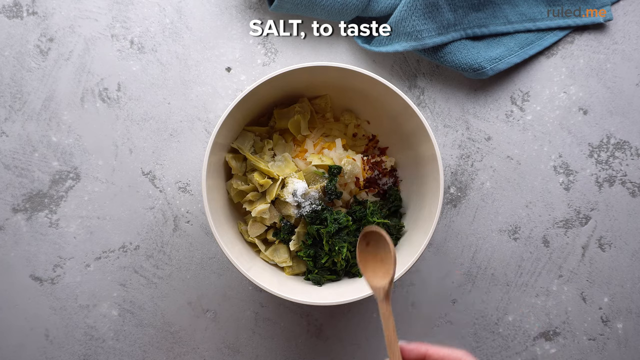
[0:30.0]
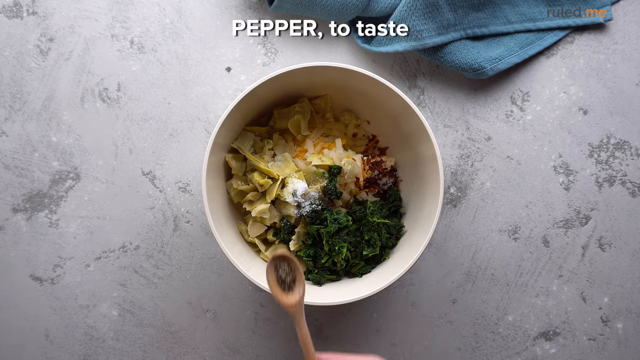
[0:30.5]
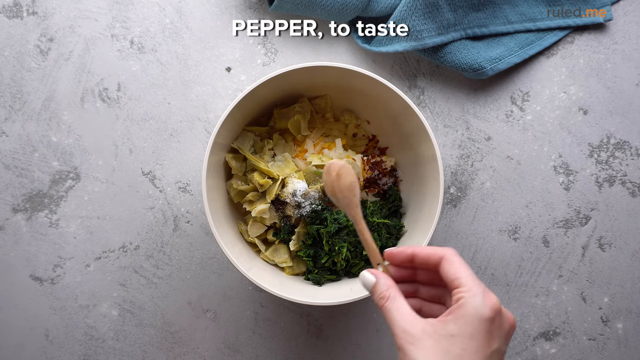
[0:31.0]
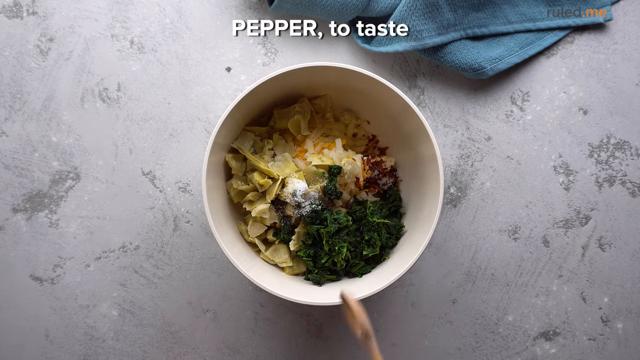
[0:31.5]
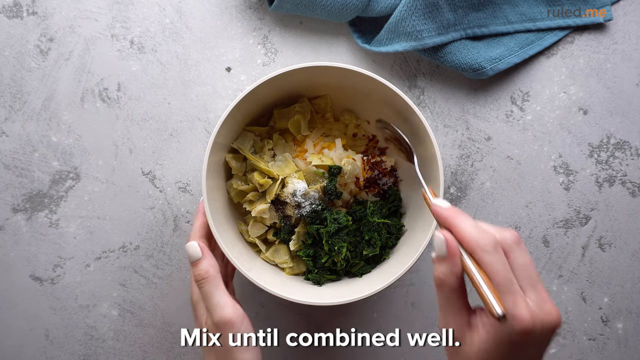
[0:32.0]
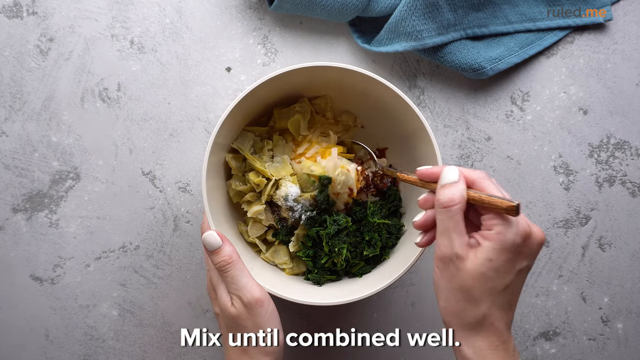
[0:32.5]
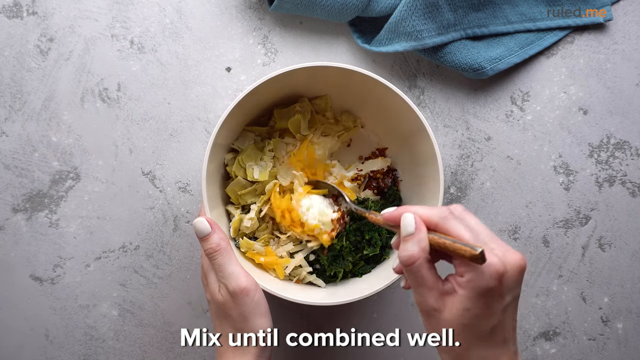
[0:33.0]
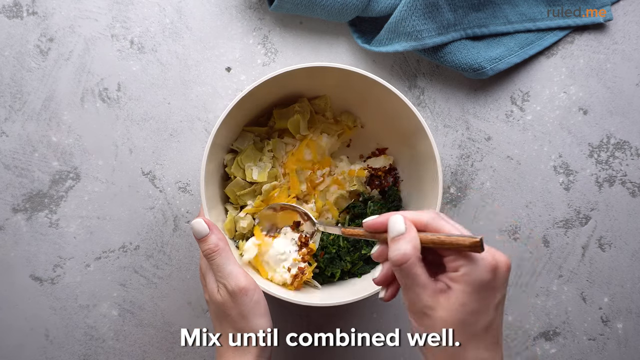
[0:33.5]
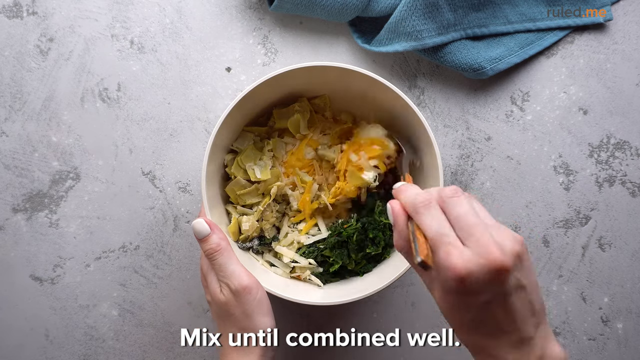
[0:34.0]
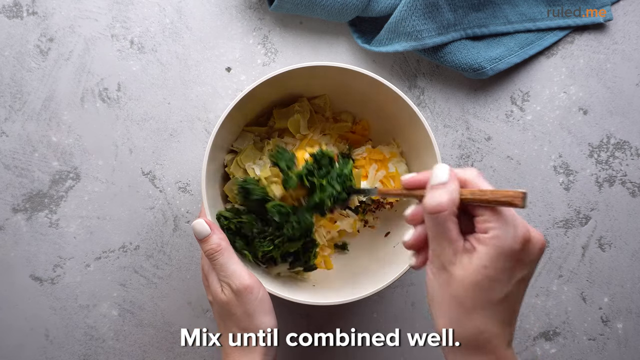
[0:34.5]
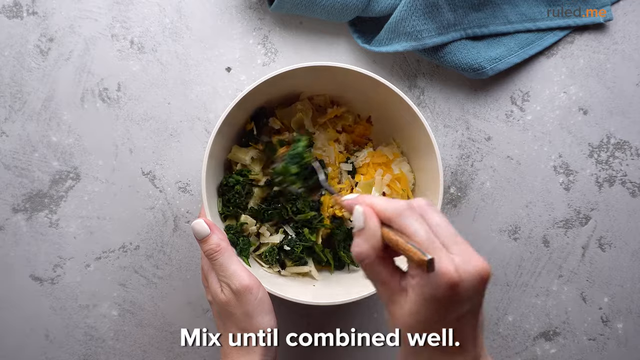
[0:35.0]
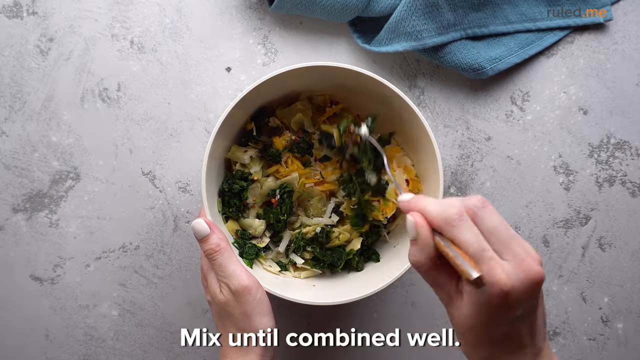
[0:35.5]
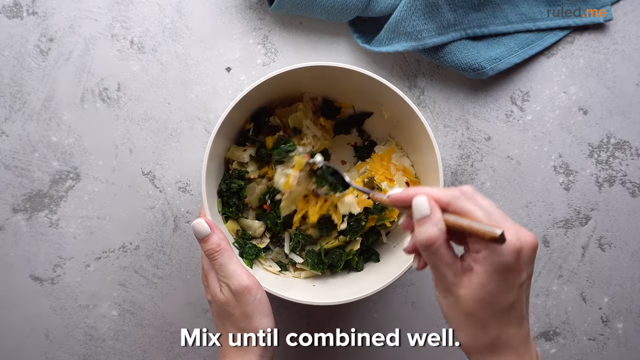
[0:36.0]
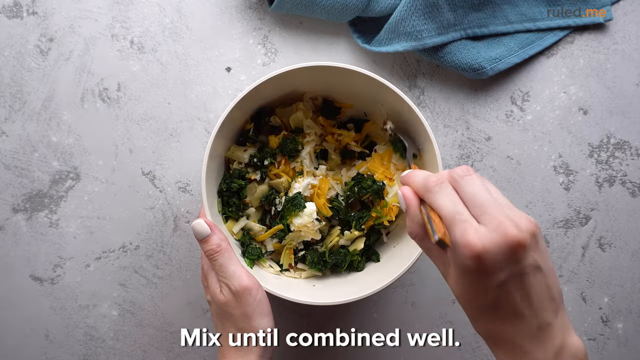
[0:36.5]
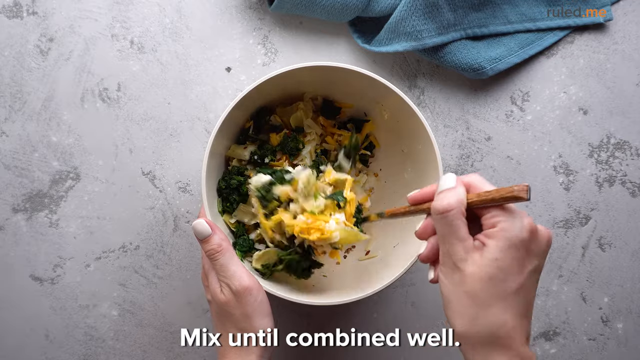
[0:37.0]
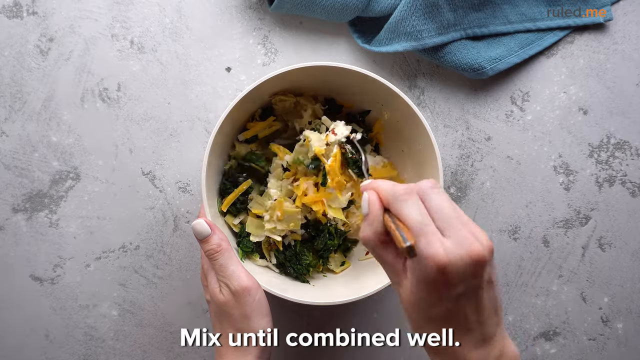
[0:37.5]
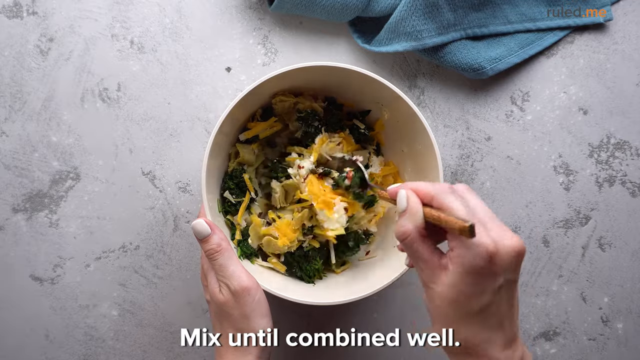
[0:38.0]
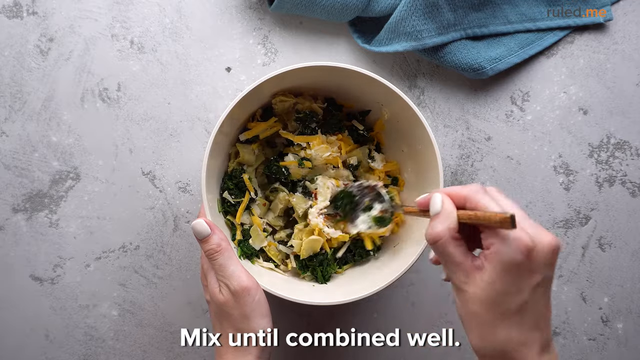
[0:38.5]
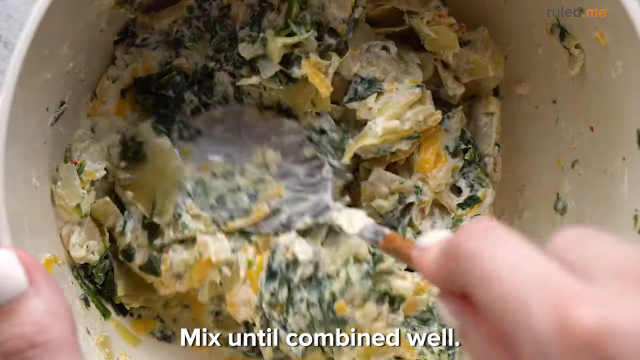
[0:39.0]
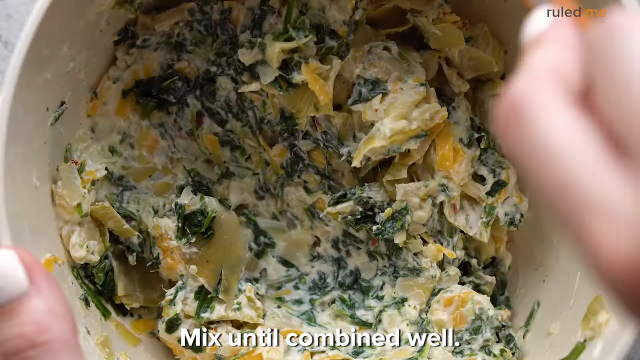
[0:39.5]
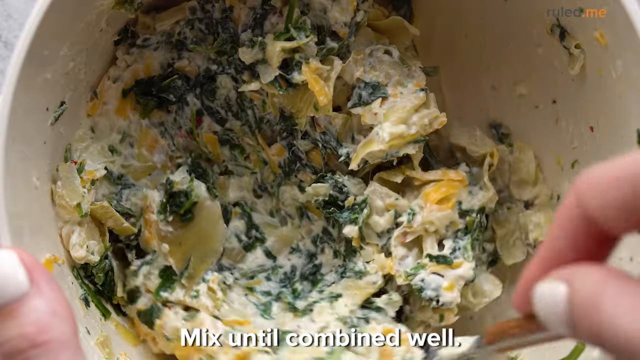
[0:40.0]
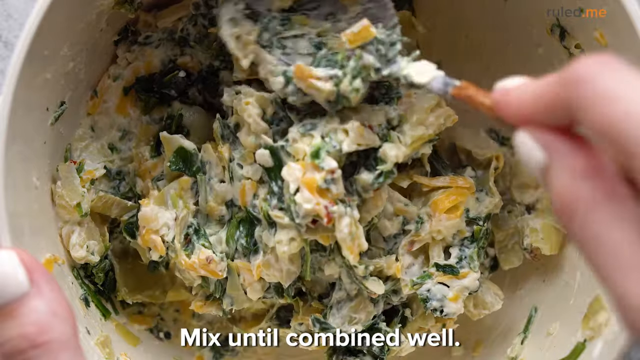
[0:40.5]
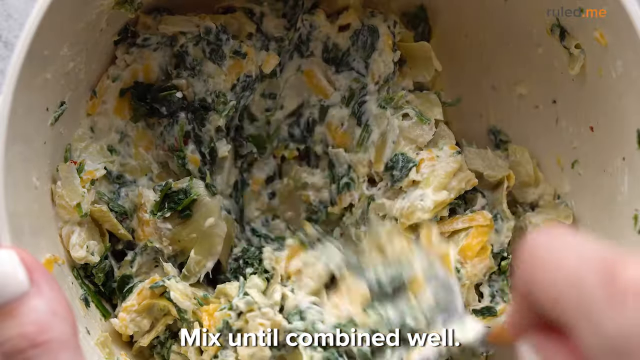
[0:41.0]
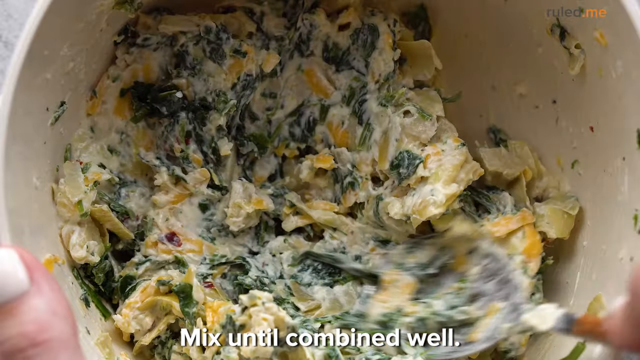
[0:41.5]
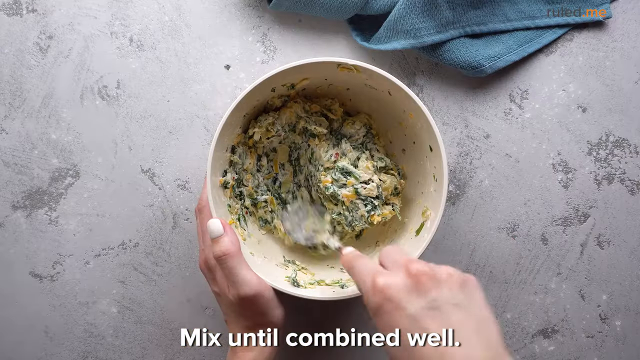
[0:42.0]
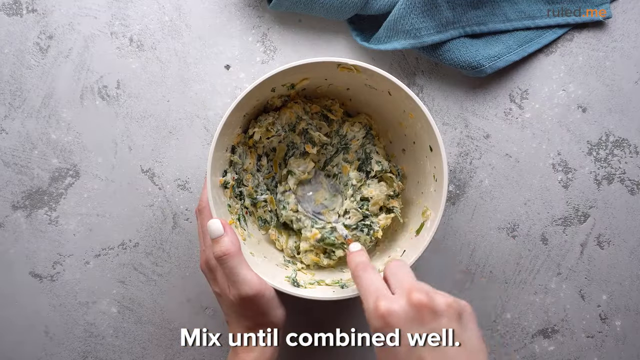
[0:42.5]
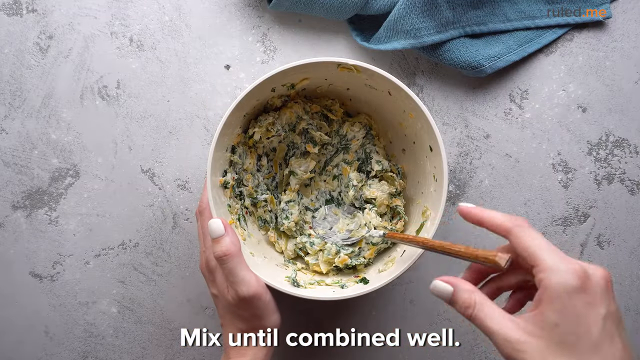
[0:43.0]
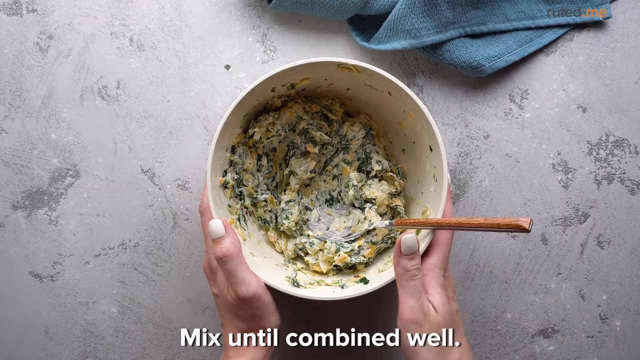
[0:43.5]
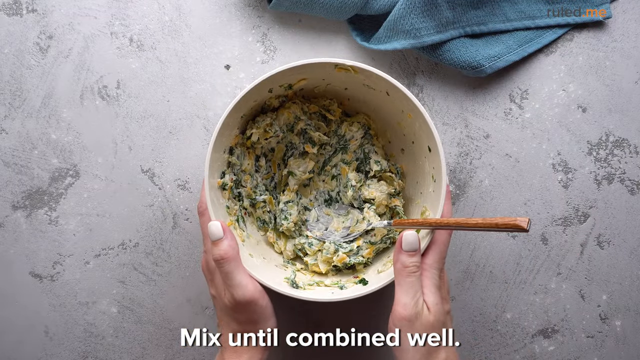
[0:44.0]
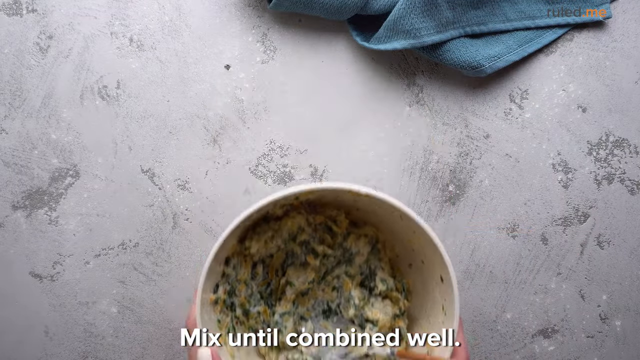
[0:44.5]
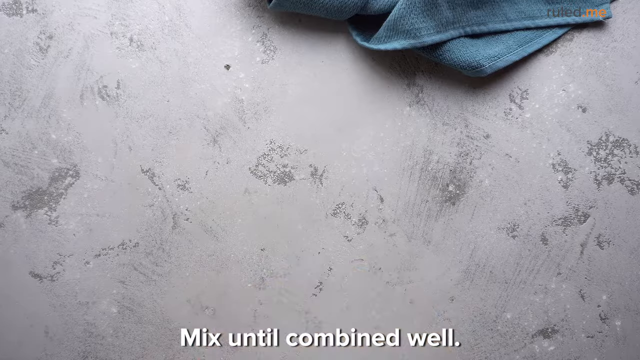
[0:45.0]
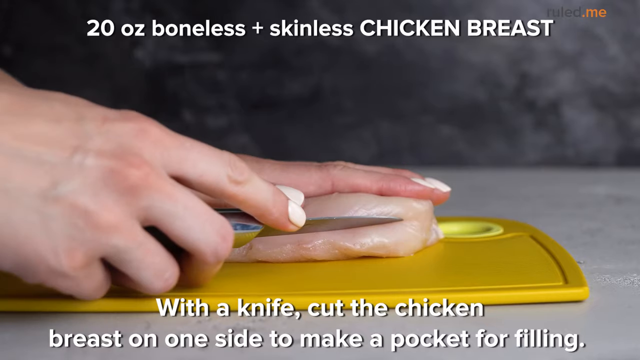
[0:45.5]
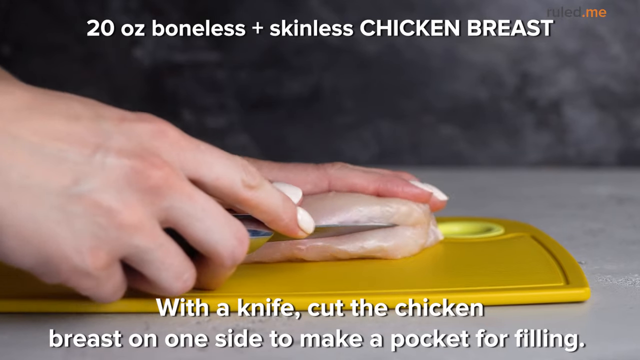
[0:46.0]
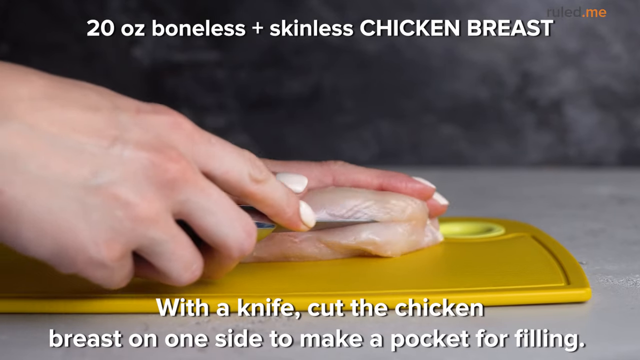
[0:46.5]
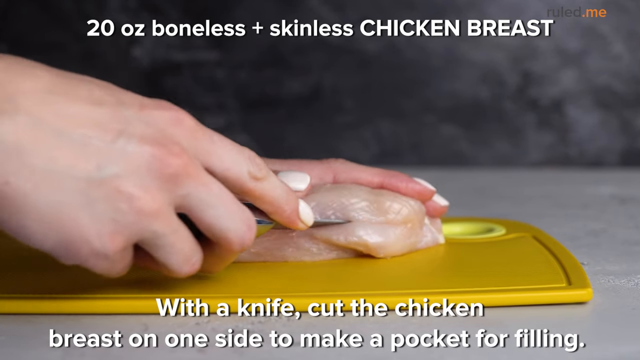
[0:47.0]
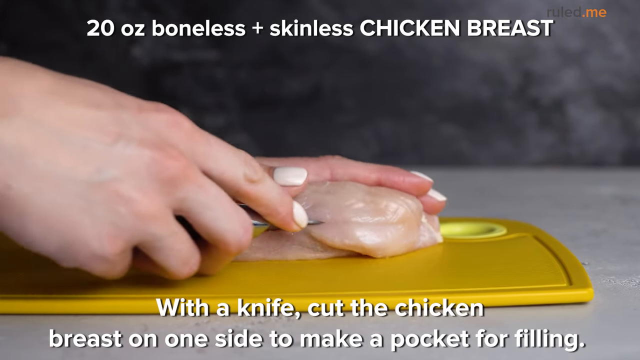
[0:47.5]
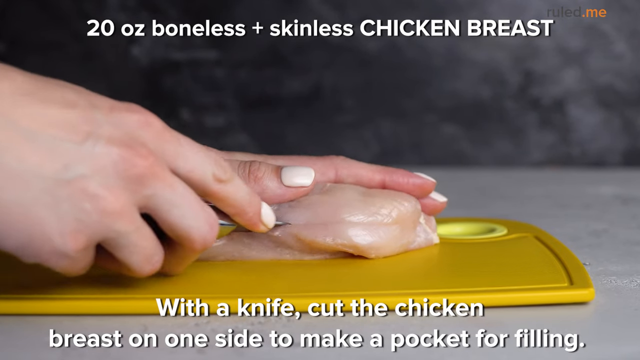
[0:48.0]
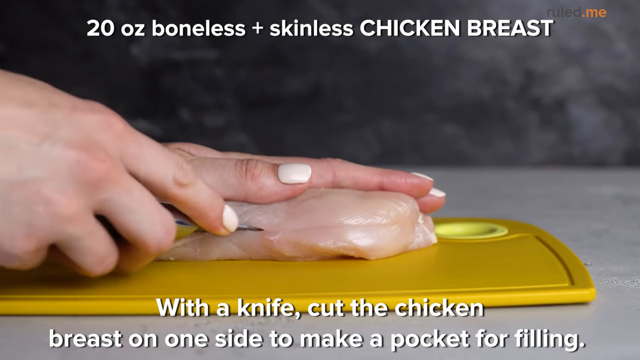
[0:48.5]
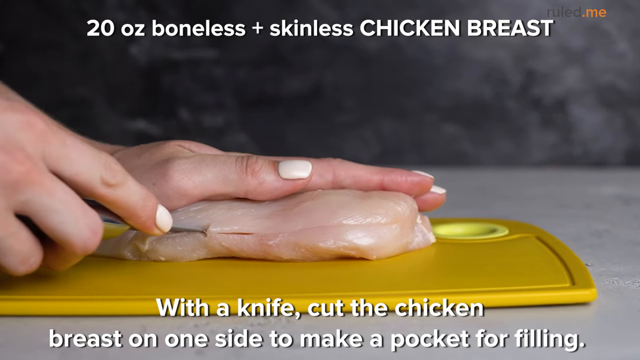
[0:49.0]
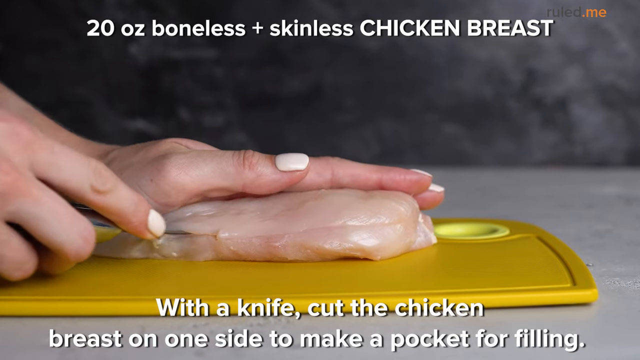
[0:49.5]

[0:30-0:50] The person stirs the ingredients in the large bowl, mixing and blending them, and a close-up shows the fully blended mixture. The person takes the bowl away. Then, on a tan cutting board, two hands slice a raw chicken breast down the center with a knife, cutting it in the middle so that it is thin on the bottom and thin on the top. The person has white nail polish. A blue dish towel is by the bowl, on a gray countertop with what looks like a marbled stone pattern. The cutting board has a hole in it lined with lime green.